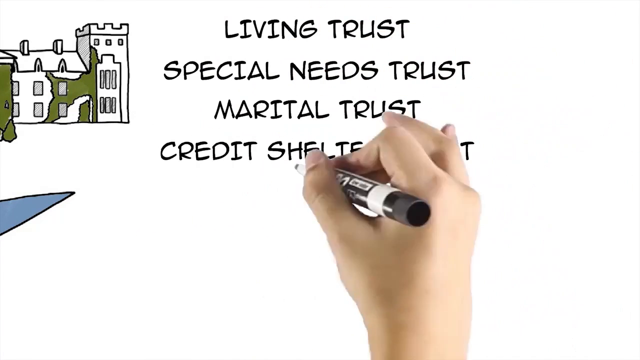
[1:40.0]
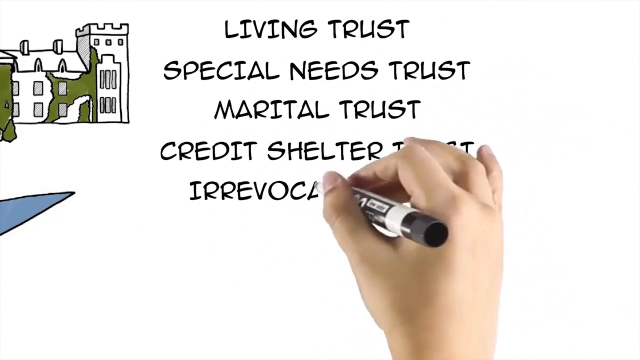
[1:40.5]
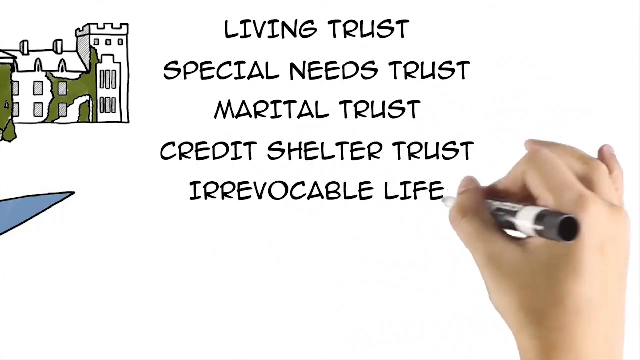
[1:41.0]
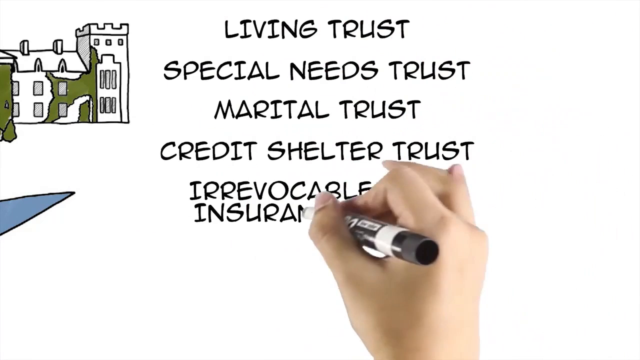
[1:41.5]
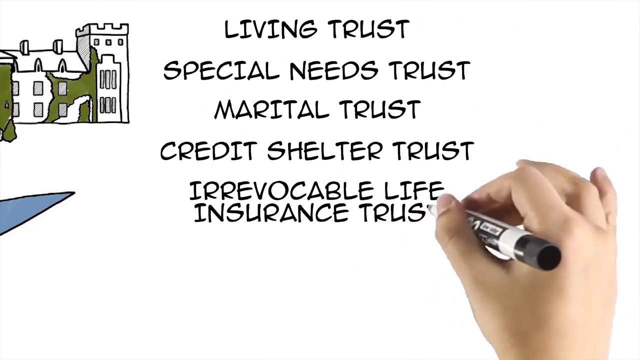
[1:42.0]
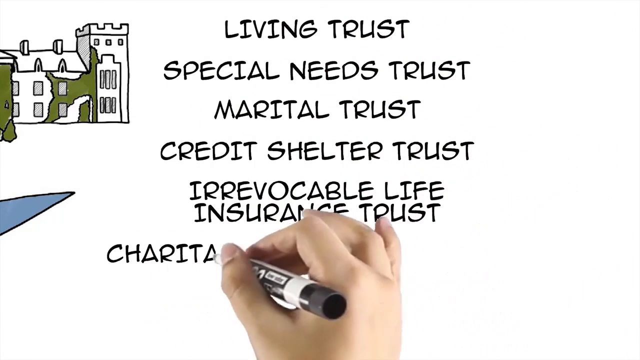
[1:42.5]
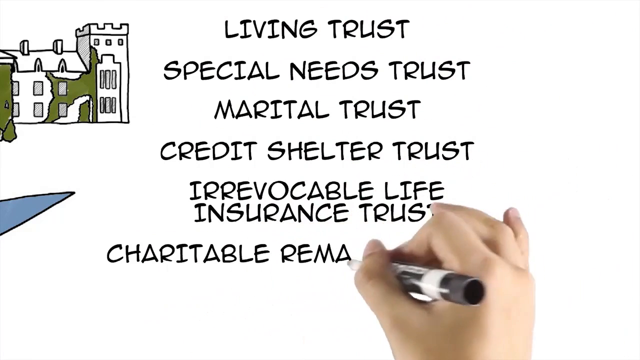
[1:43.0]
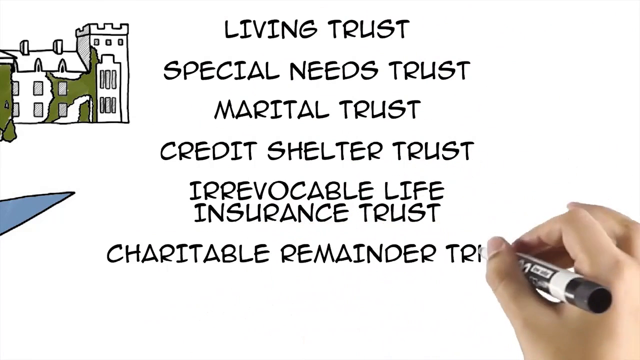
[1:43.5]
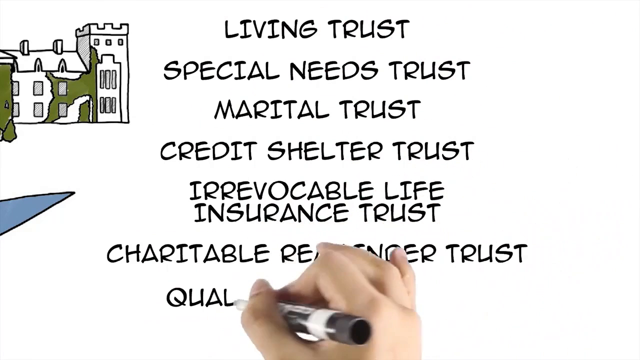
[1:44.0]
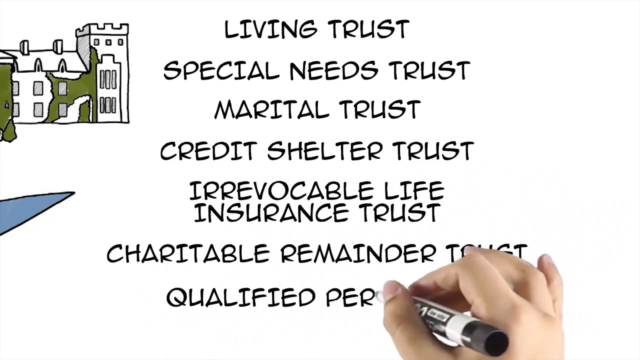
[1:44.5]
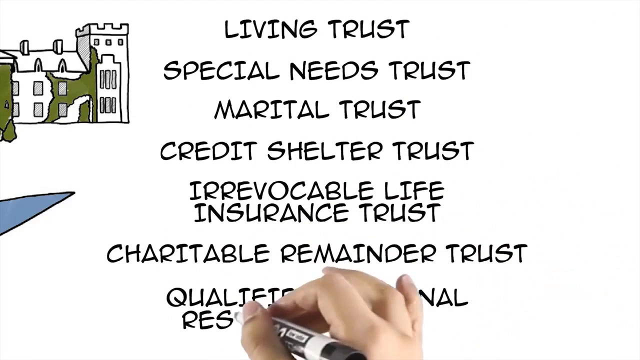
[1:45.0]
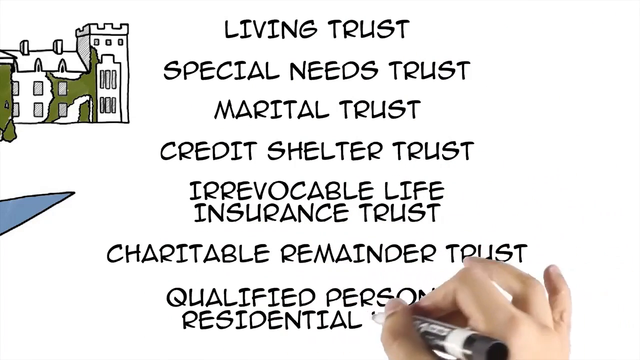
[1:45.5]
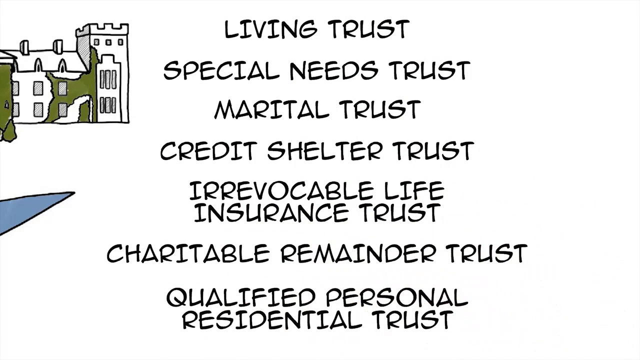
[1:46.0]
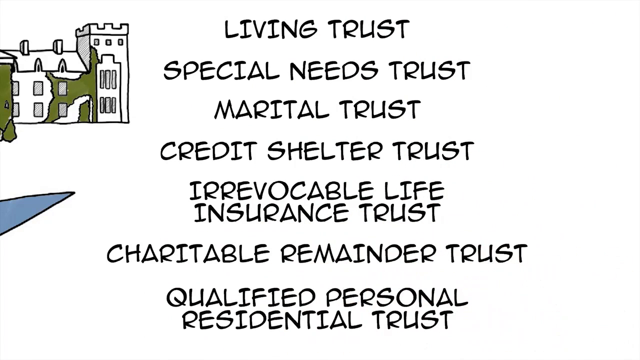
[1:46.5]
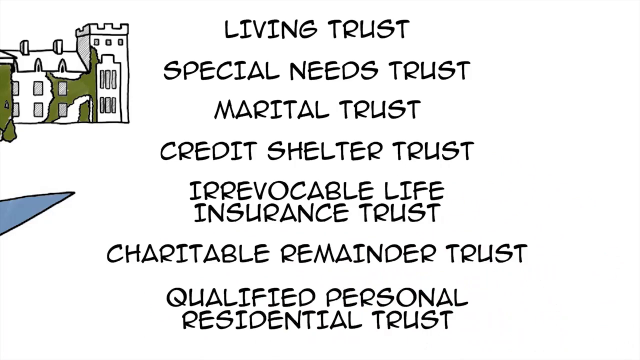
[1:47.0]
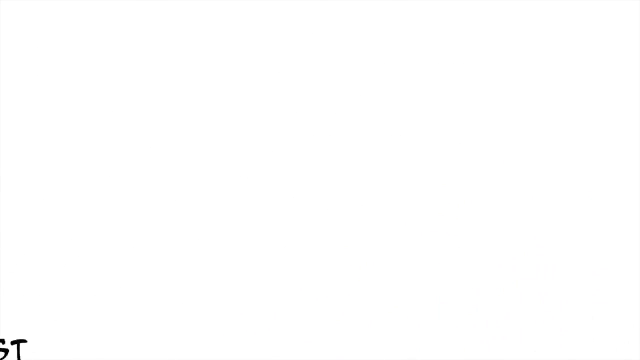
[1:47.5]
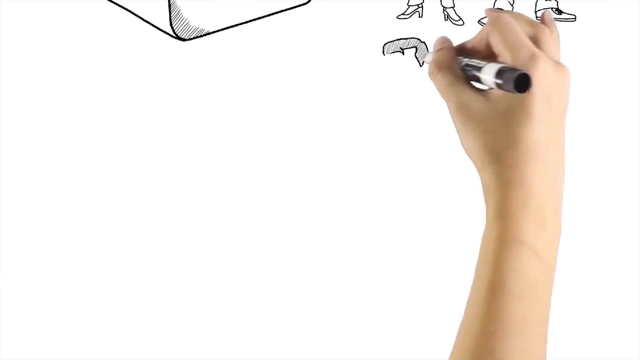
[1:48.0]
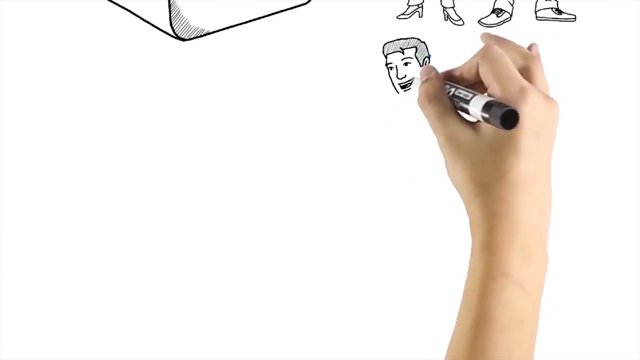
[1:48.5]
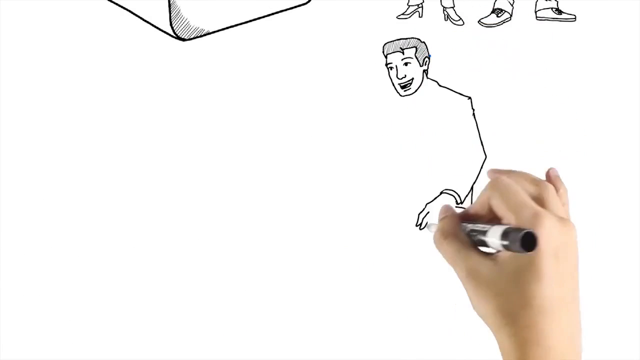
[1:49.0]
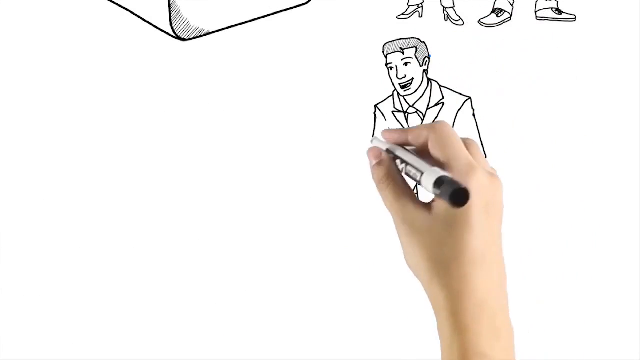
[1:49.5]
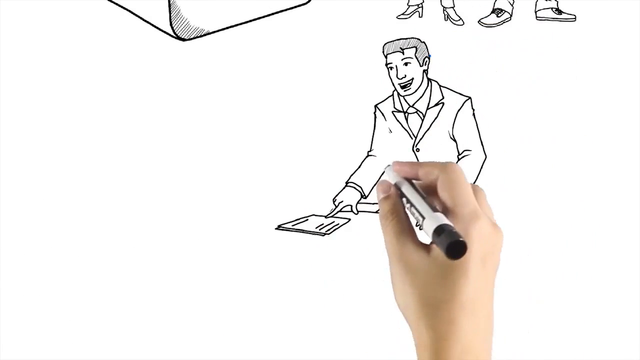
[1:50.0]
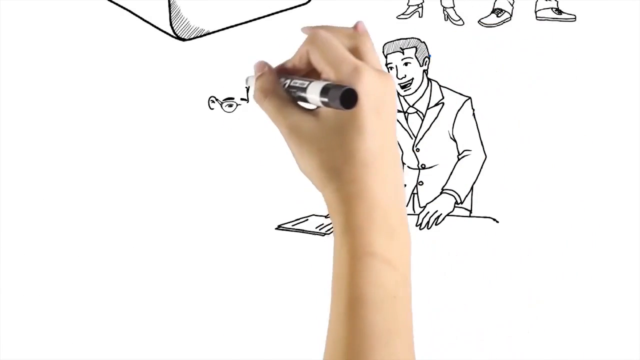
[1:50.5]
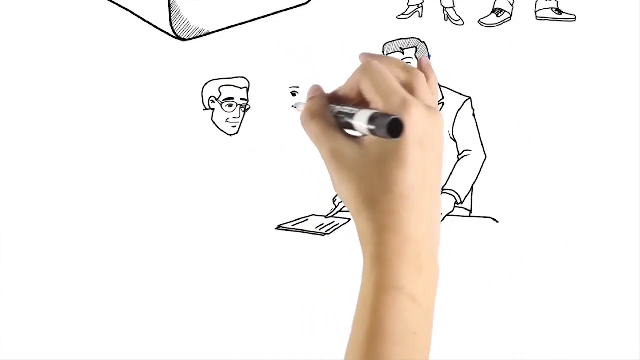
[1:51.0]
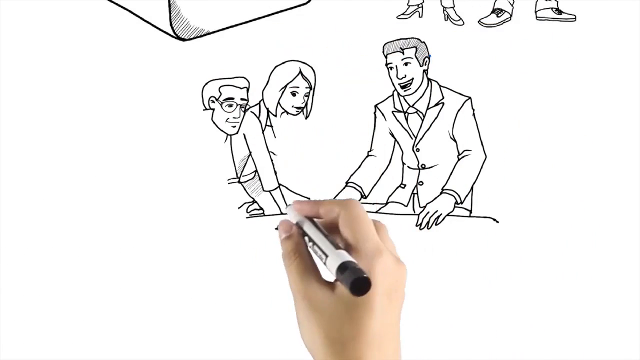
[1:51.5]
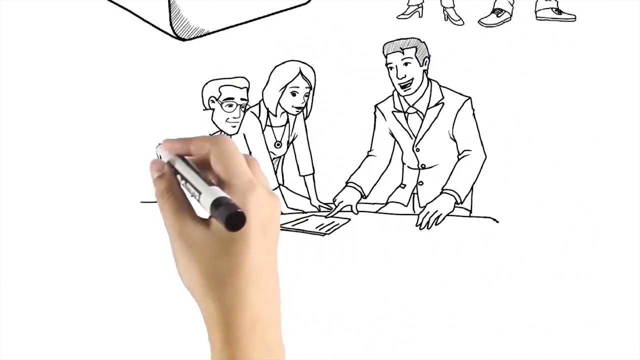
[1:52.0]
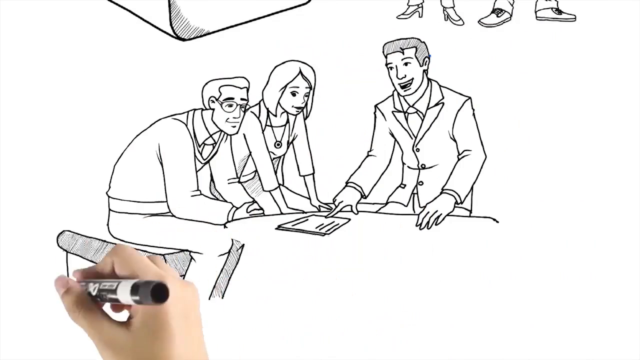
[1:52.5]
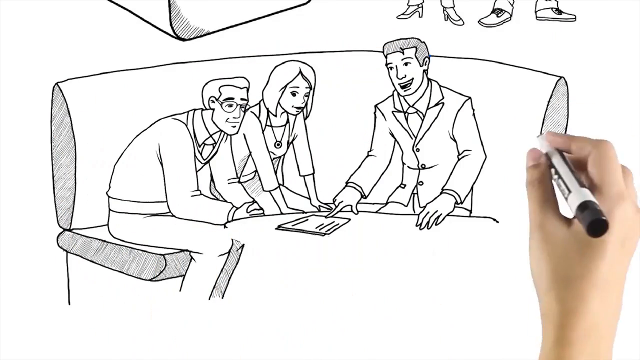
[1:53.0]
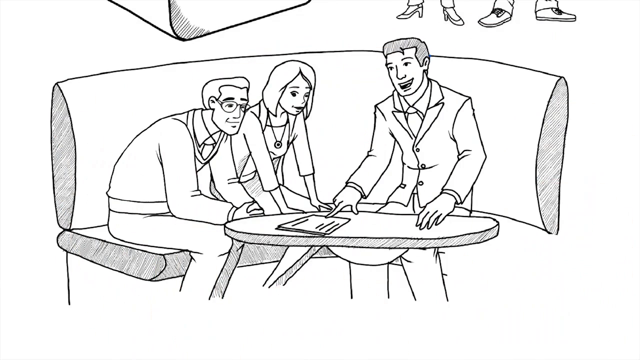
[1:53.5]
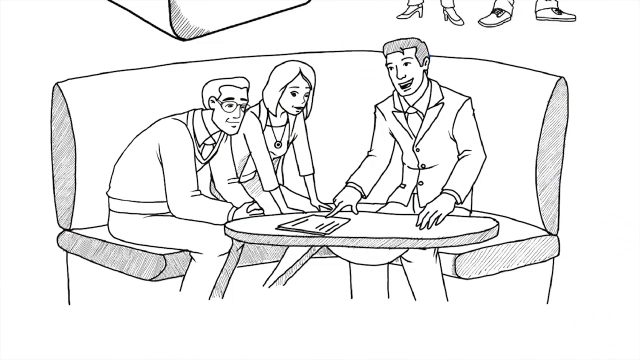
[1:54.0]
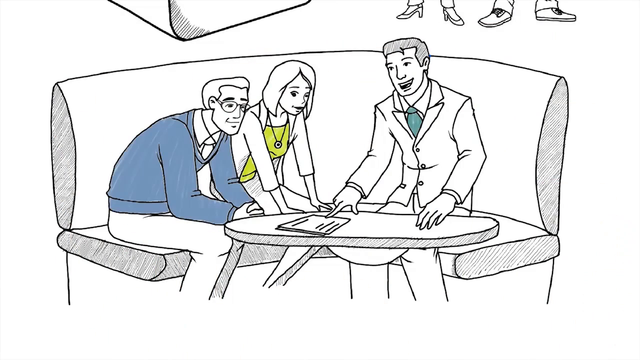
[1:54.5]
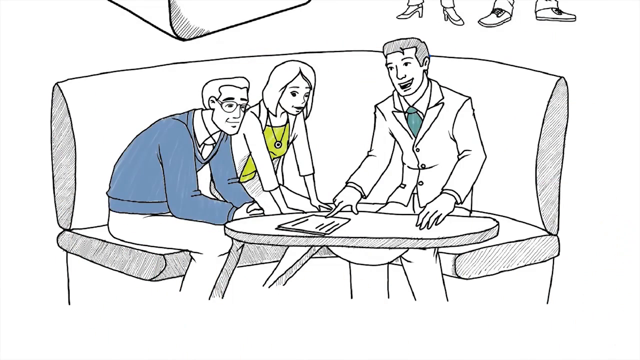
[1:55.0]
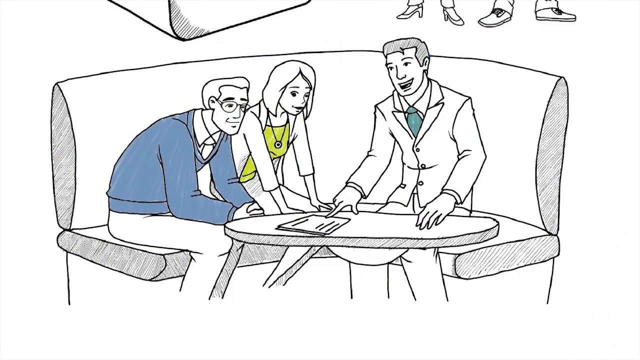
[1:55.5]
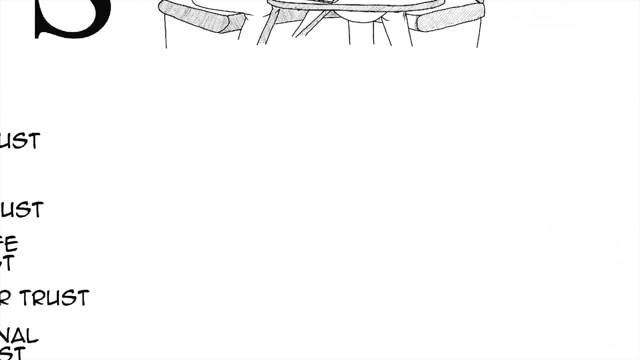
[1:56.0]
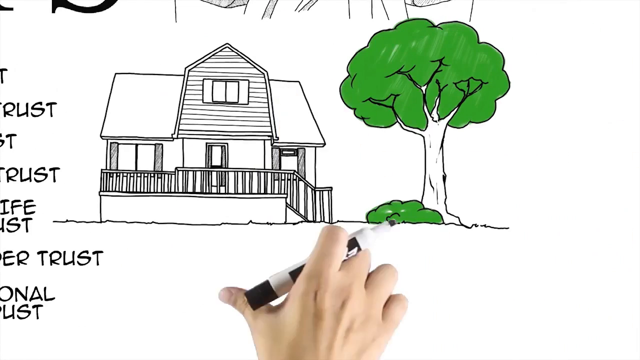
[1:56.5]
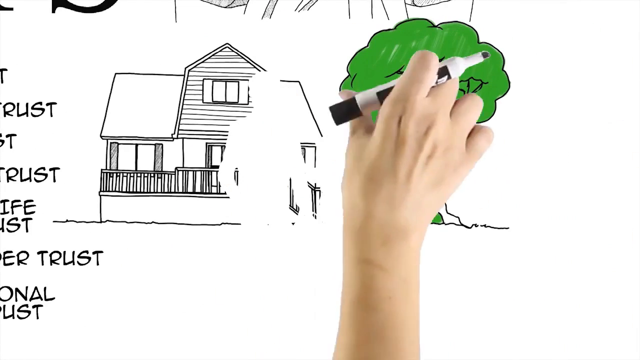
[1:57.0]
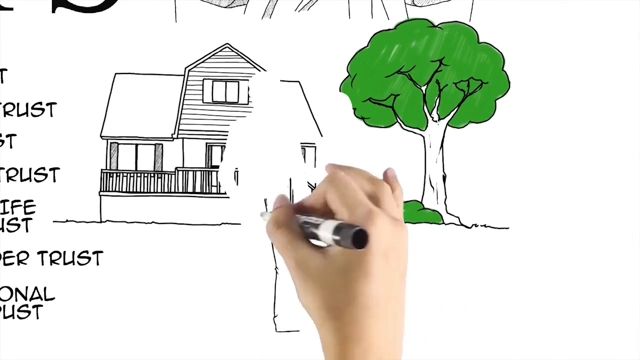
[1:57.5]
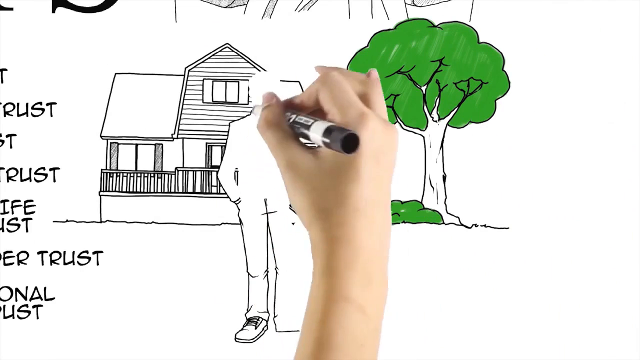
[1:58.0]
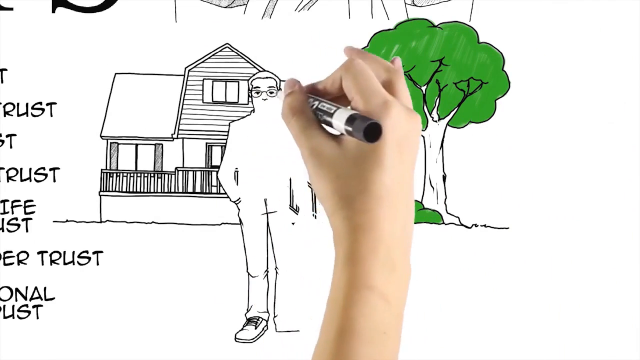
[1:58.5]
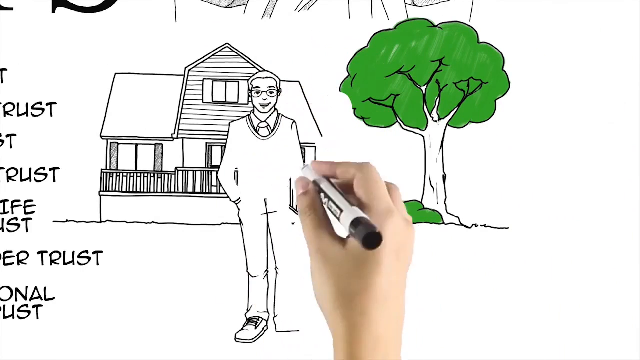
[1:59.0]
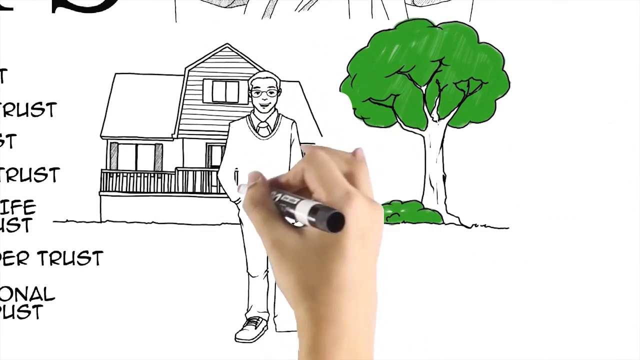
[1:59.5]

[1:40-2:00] The pen finishes writing "Credit Shelter Trust" and then writes "Irrevocable Life Insurance Trust", "Charitable Remainder Trust" and "Qualified Personnel, Residential Trust". These disappear off the screen. With a black pen, the hand makes a line drawing of somebody wearing a jacket and tie, smiling while touching a piece of paper on the table with his right pointing finger. To his left is a couple: the man wears glasses and the woman has a necklace, and they are looking down at the paper the gentleman is pointing at. The paper is on an oval table, and all of them are sitting on a curved sofa. The man's jumper turns blue, the woman's top turns lime green, and the gentleman's tie turns teal. The house is then moved in, and the man is drawn in front of it. All the drawing is done by a right hand holding a pen in a pincer grip; the pen occasionally changes colour to add colour to the images or to add shading, and there is shading on the curved sofa.